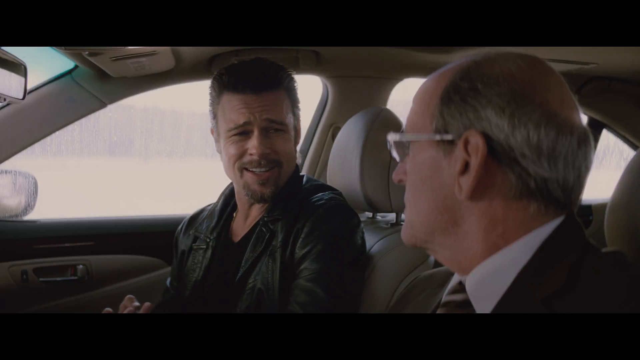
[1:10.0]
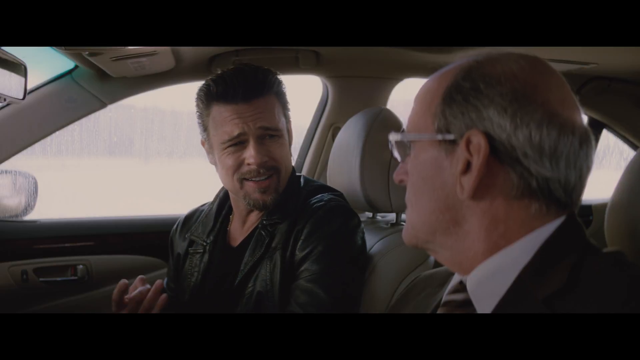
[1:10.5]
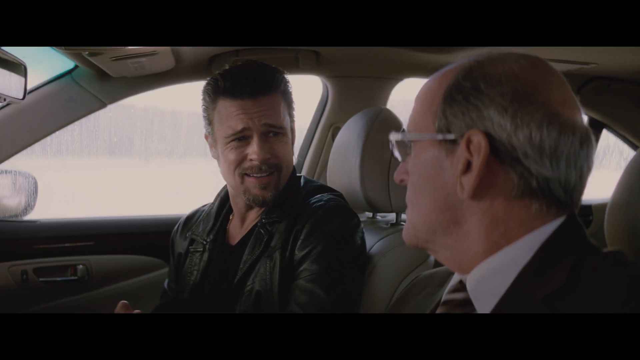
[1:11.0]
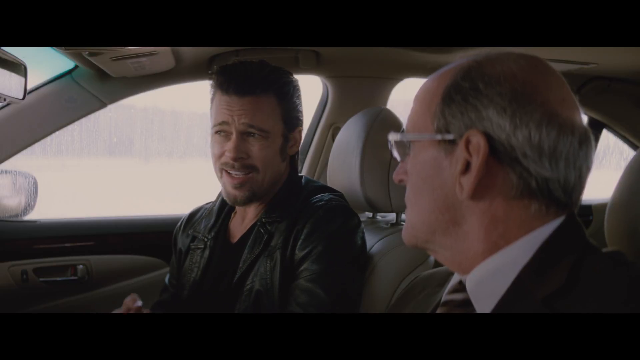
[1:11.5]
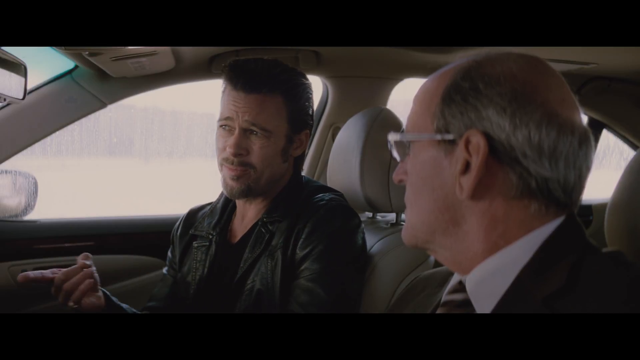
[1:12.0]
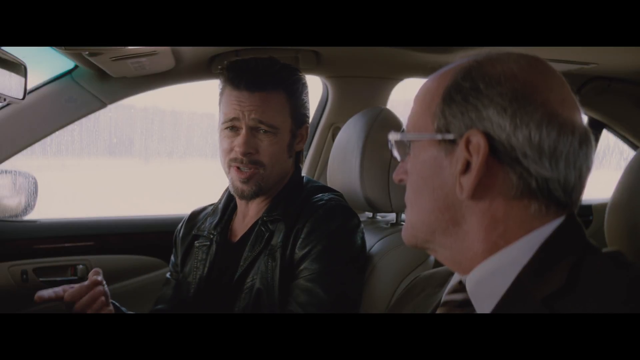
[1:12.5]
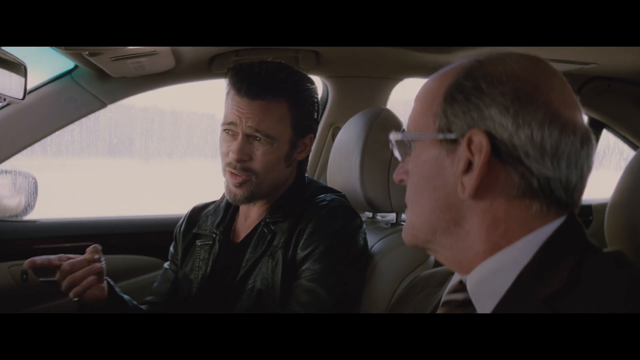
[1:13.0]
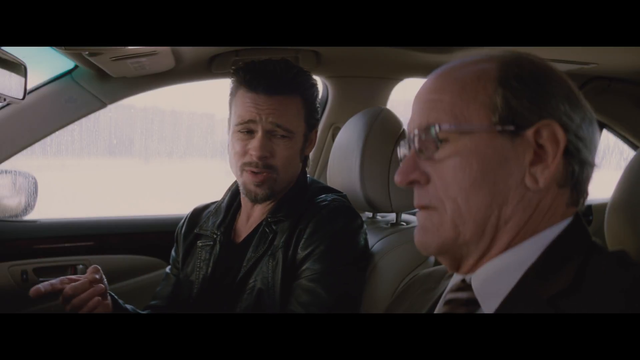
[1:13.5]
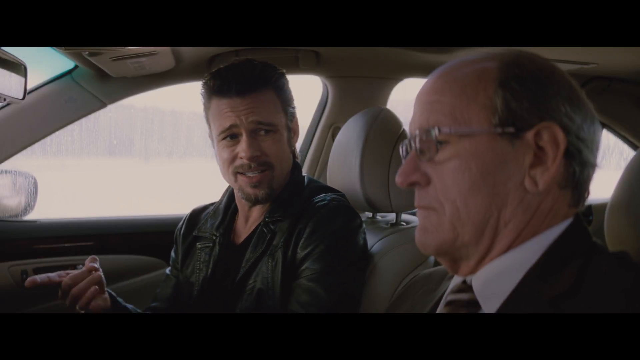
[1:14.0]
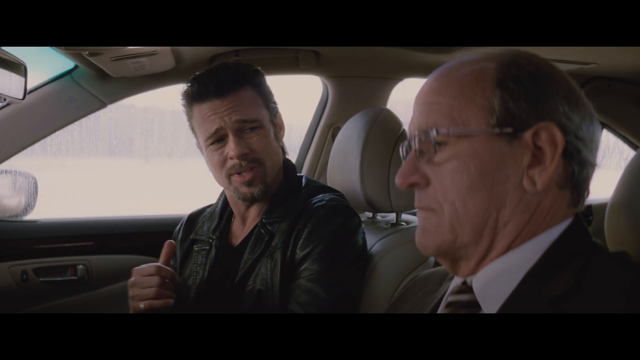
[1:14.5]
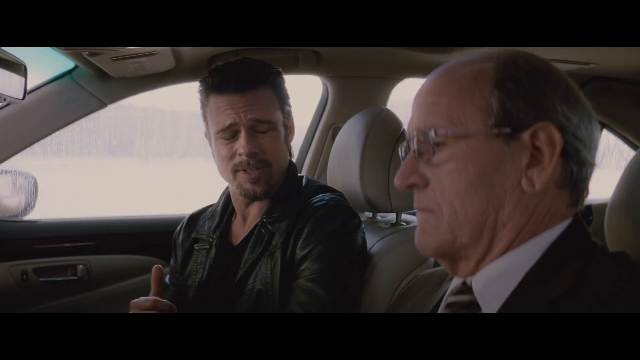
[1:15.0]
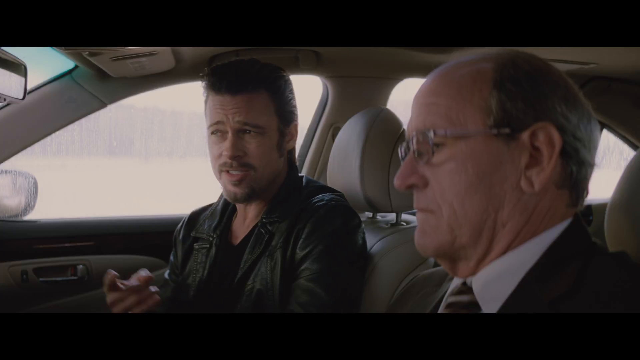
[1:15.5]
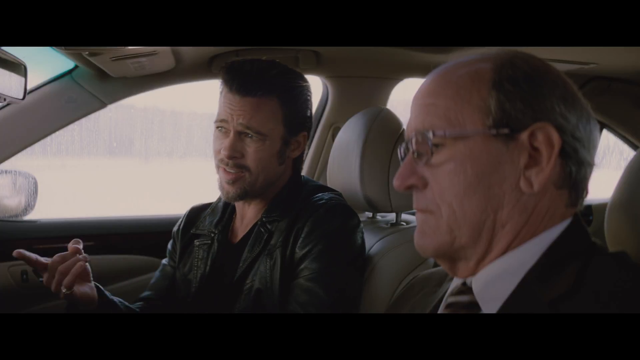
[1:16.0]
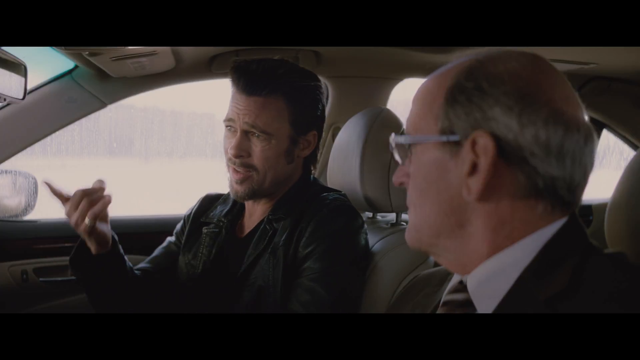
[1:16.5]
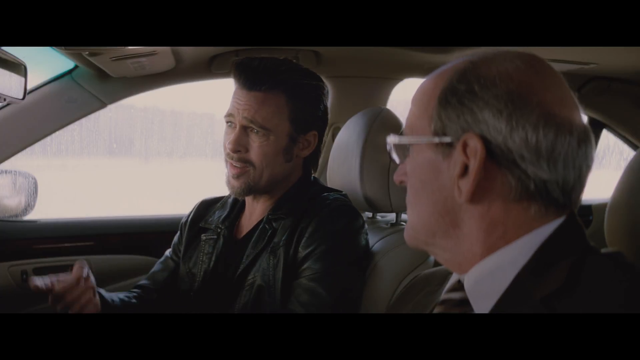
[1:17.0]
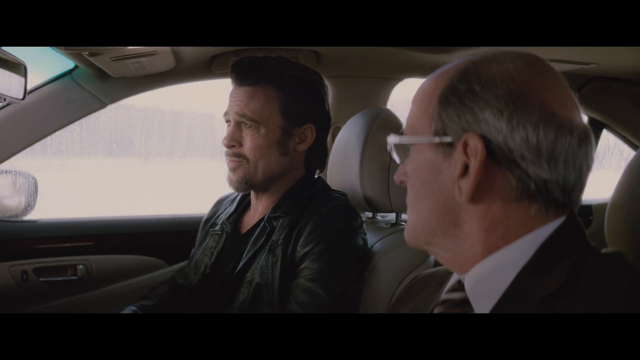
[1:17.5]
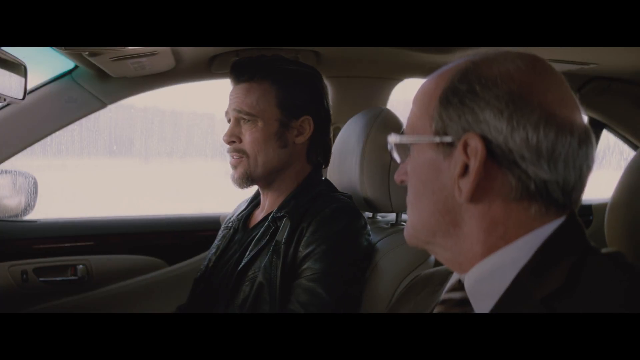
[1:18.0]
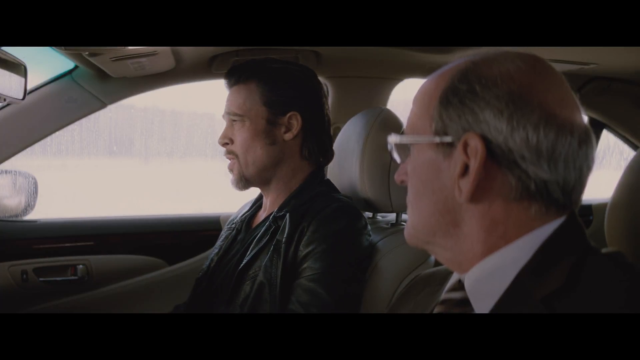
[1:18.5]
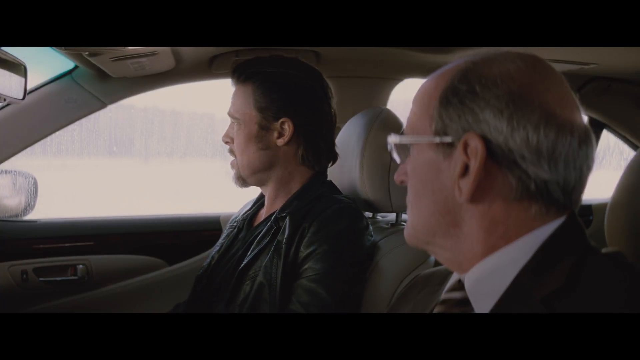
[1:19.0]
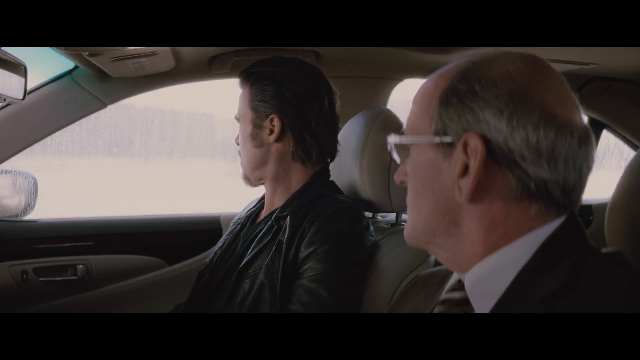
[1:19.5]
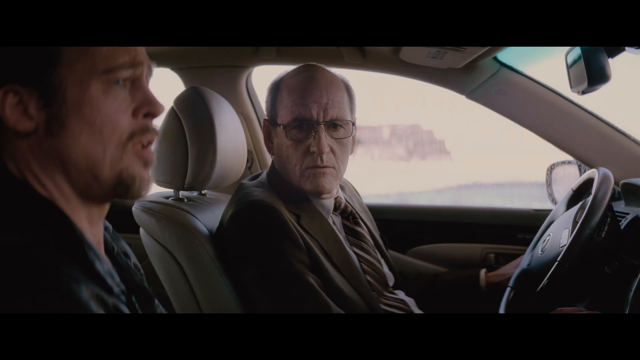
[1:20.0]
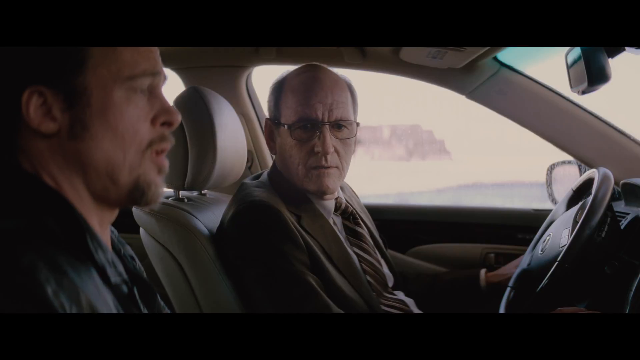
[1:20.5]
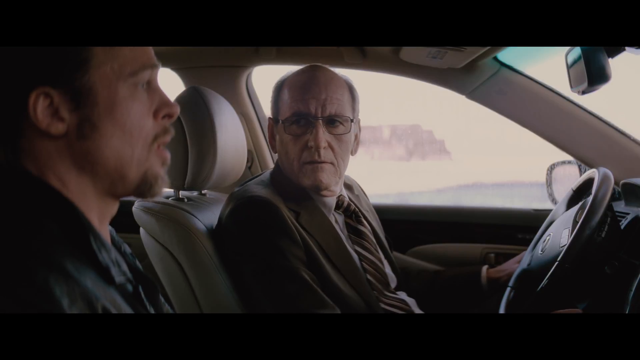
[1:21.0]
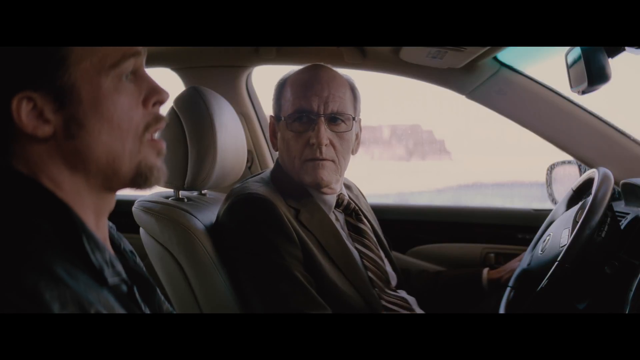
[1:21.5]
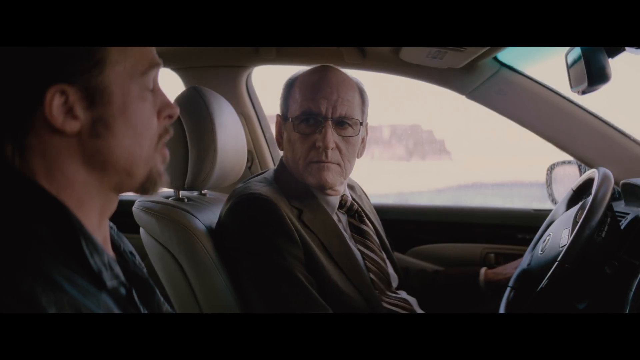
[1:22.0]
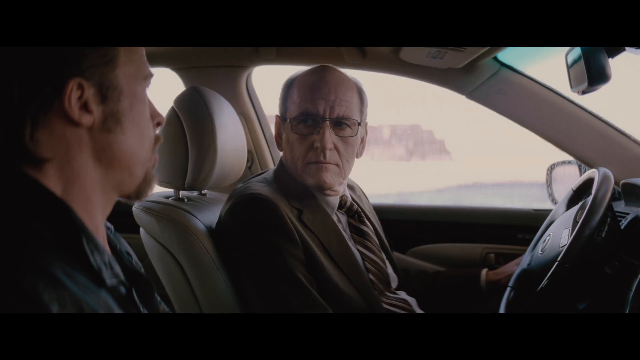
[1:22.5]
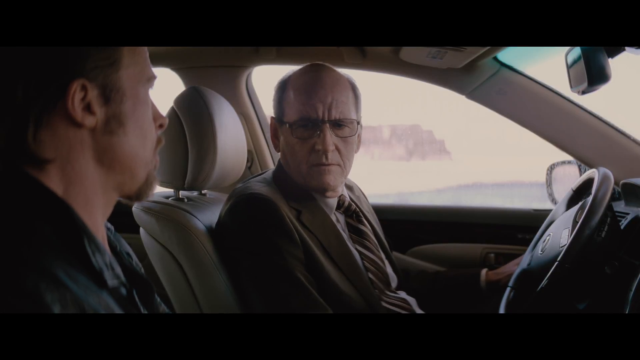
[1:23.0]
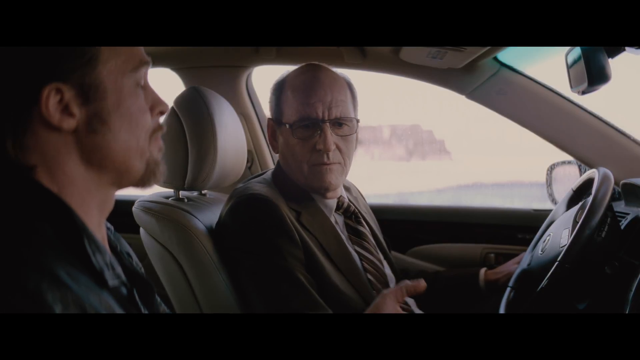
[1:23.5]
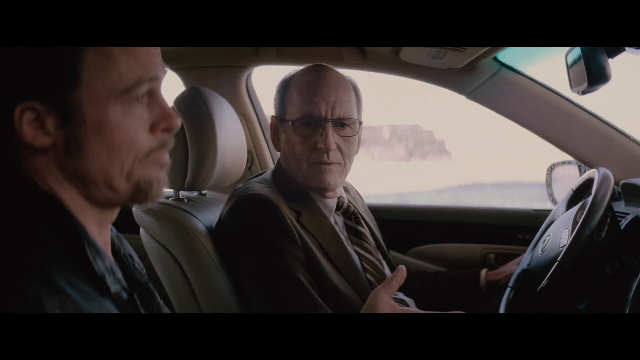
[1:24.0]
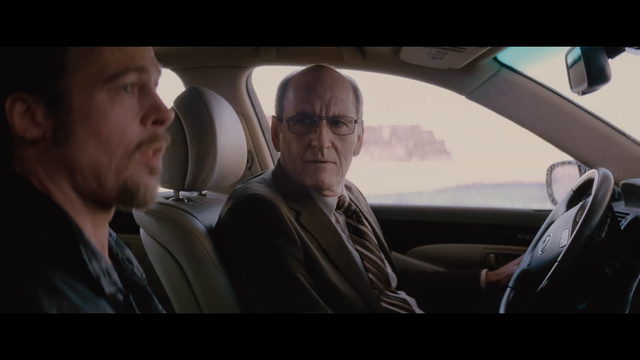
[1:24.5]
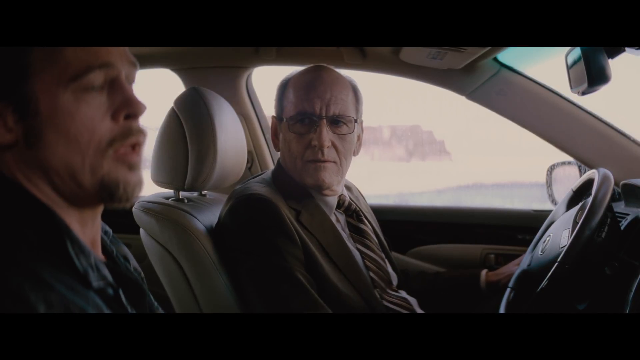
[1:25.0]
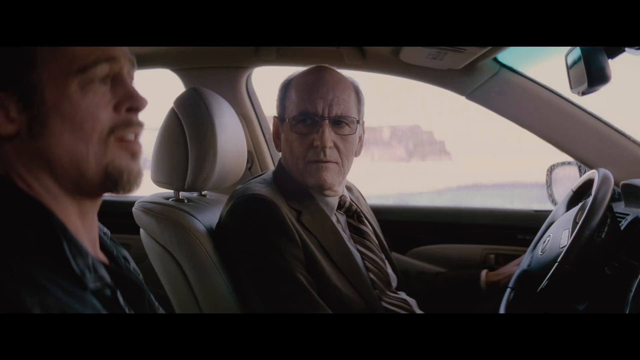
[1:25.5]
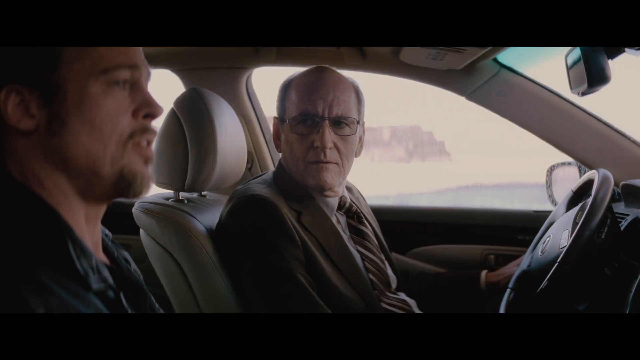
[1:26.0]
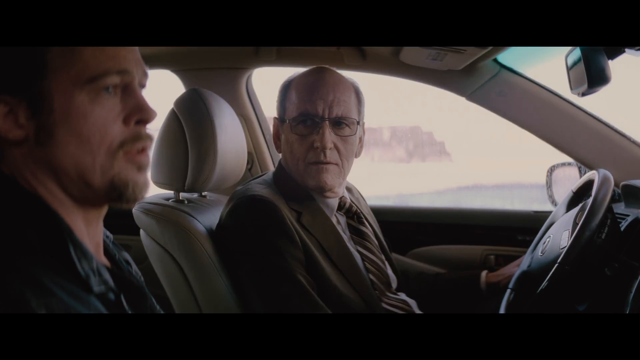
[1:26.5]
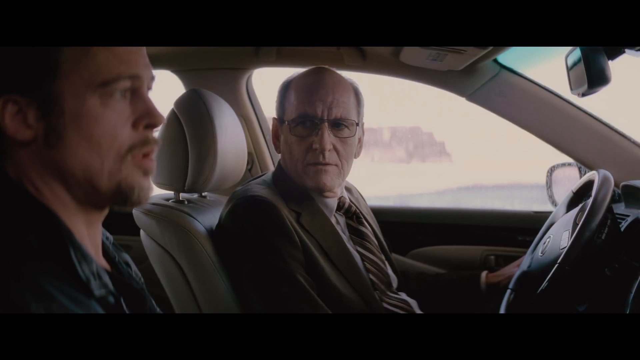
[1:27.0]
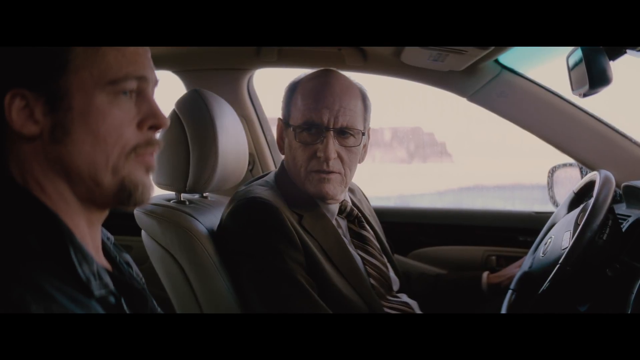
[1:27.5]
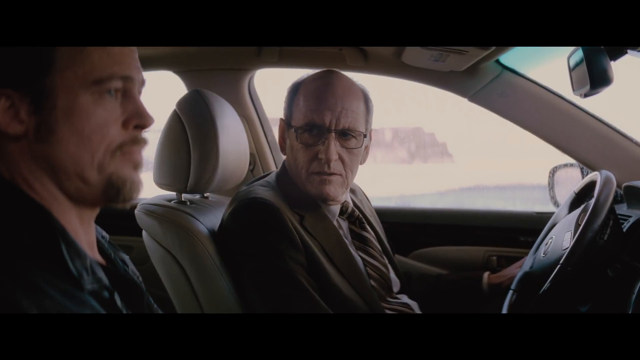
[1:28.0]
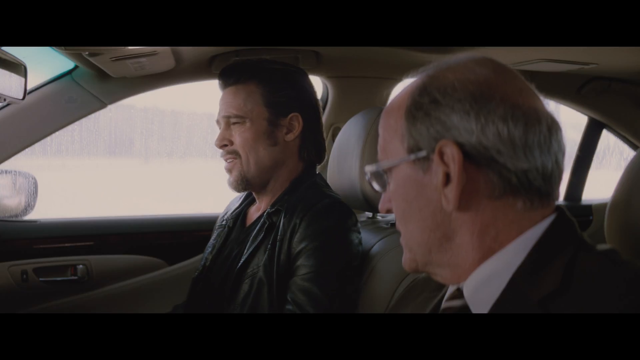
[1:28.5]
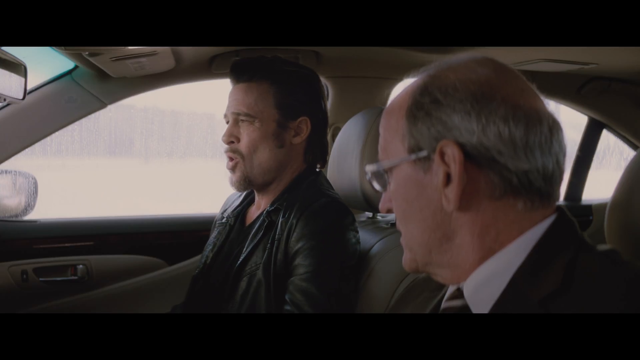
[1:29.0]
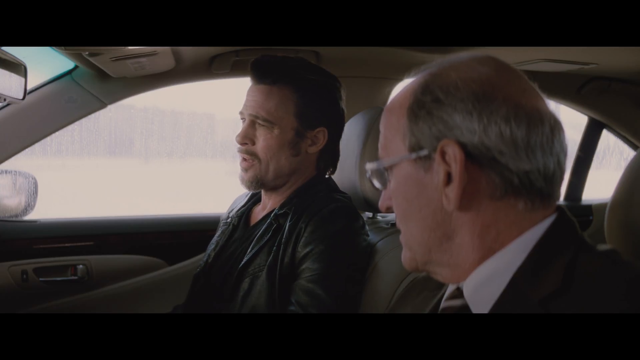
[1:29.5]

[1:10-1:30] Two men are in a car. On the left is Brad Pitt in a black biker-style jacket; on the right, in profile, is an older man who is somewhat balding on top and wears glasses. The older man looks at Brad Pitt, whose expression seems to ask whether the man is really going to do this. Brad Pitt points outside with the index finger of his right hand, seemingly trying to convince the man of something, and the man sort of looks away. Brad Pitt has a hairstyle somewhat like Elvis Presley's. The shot transitions to the older man, who looks over at Brad Pitt without really saying anything, looking somewhat concerned. Brad Pitt puts his left hand out, looking a bit exasperated, and the older man continues to talk to him. The shot then transitions back to Brad Pitt. The car has a beige-like interior, the rearview mirror is visible, and outside is very white and blown out, so few details can be seen.